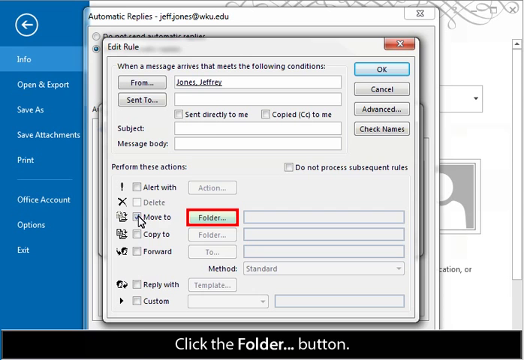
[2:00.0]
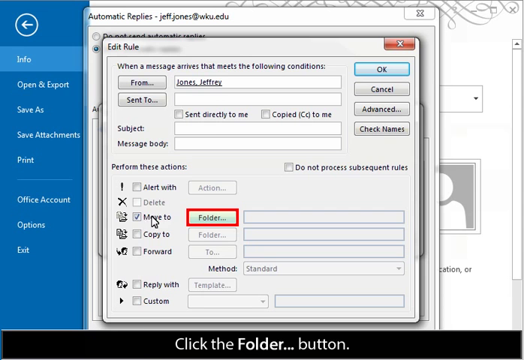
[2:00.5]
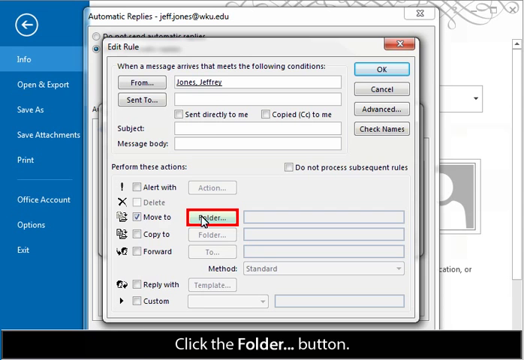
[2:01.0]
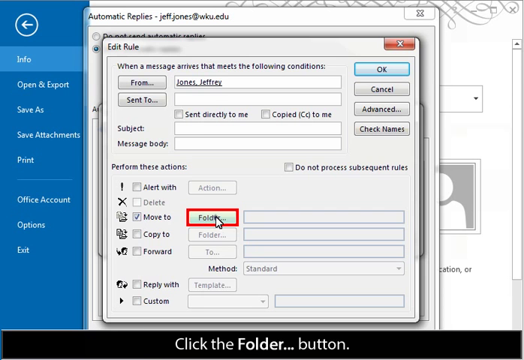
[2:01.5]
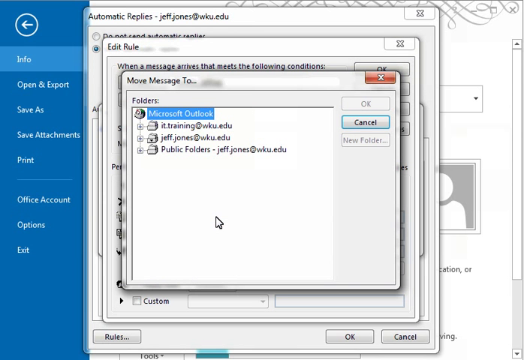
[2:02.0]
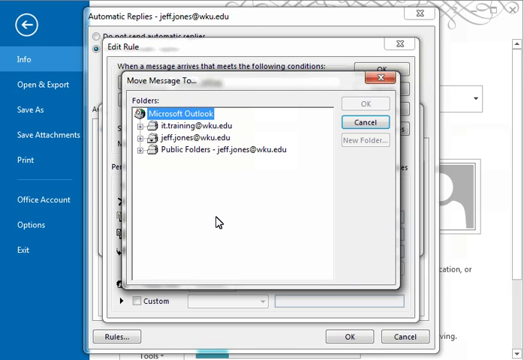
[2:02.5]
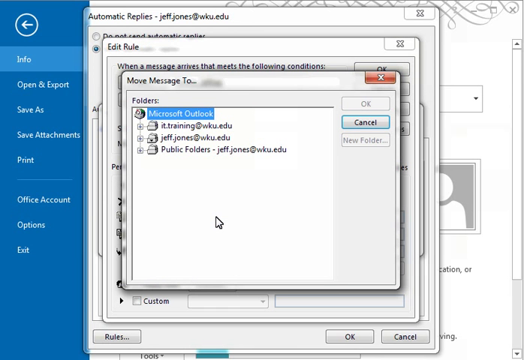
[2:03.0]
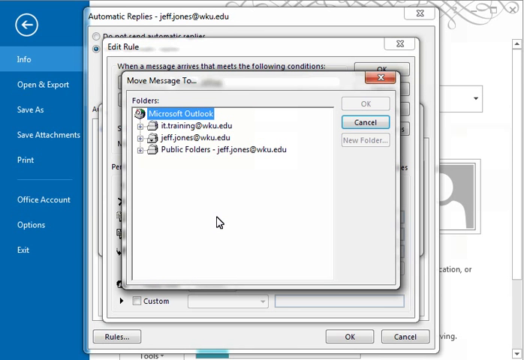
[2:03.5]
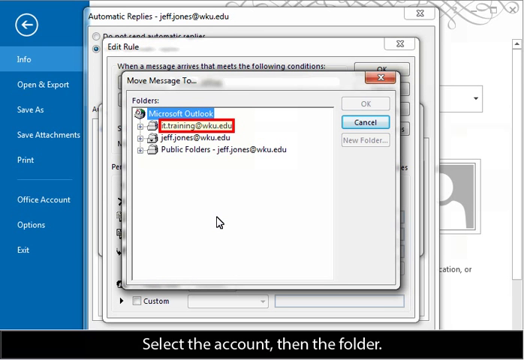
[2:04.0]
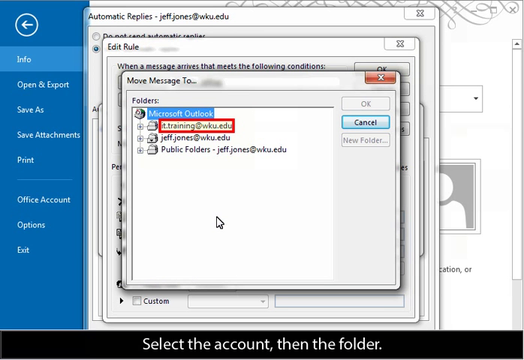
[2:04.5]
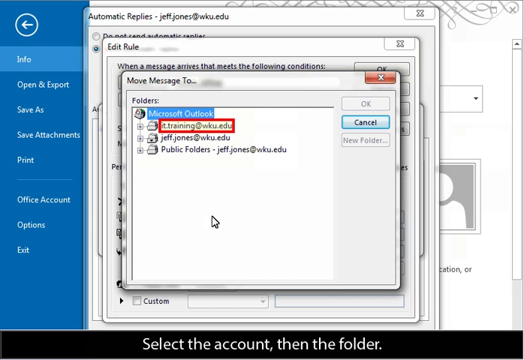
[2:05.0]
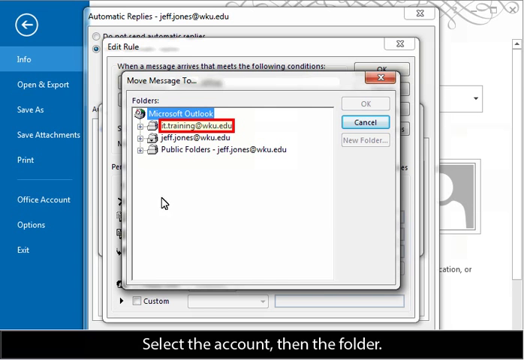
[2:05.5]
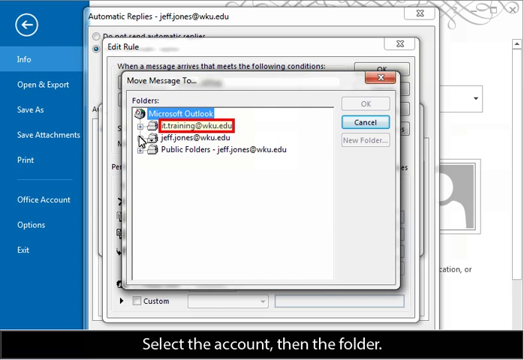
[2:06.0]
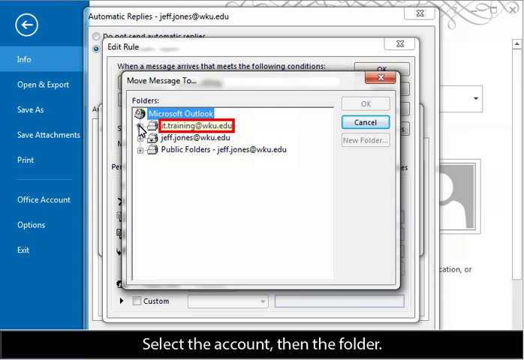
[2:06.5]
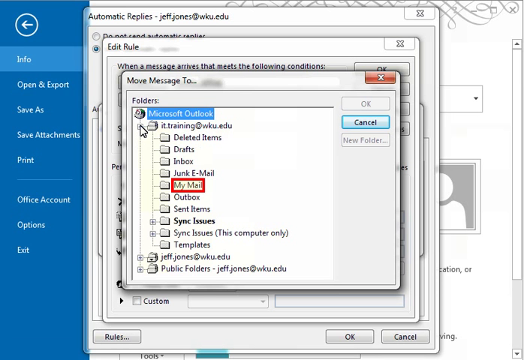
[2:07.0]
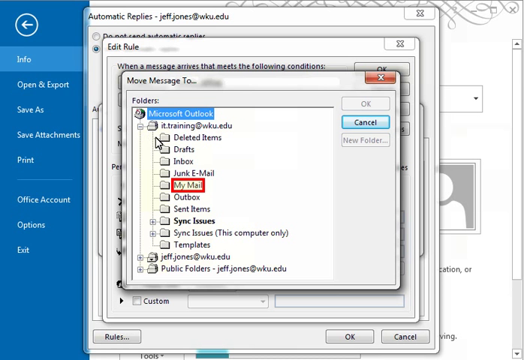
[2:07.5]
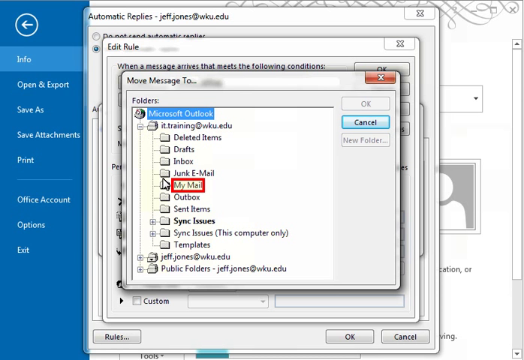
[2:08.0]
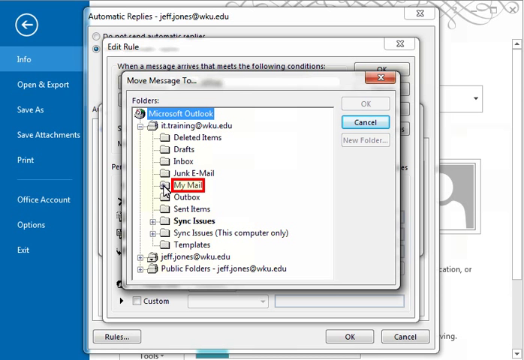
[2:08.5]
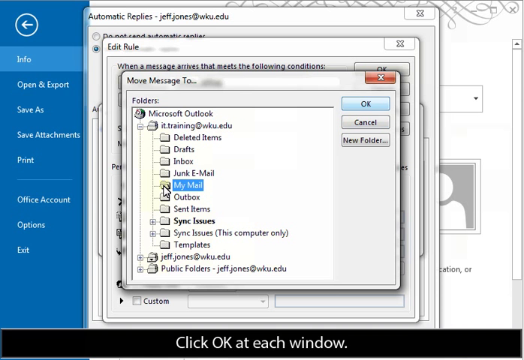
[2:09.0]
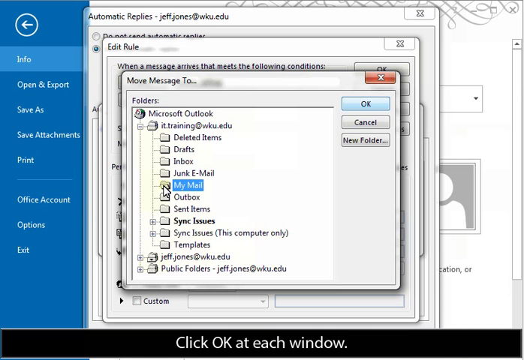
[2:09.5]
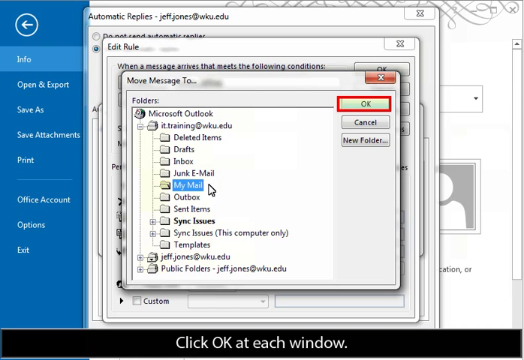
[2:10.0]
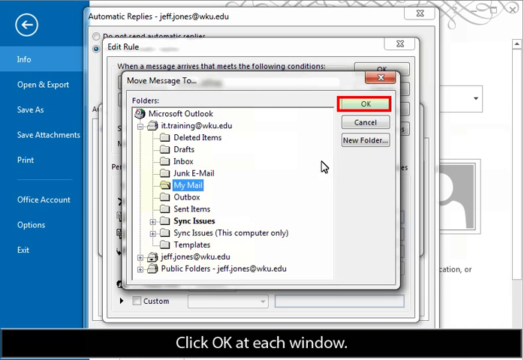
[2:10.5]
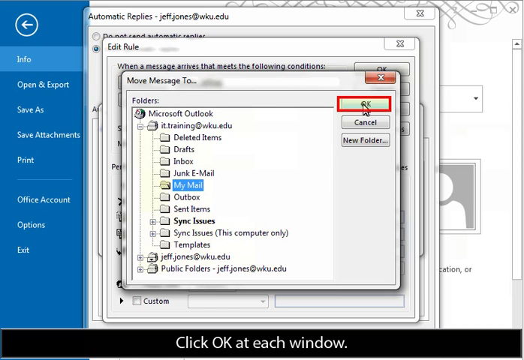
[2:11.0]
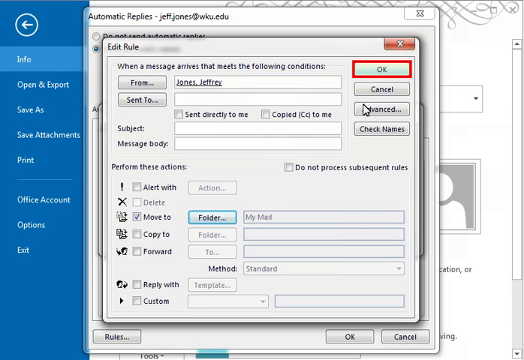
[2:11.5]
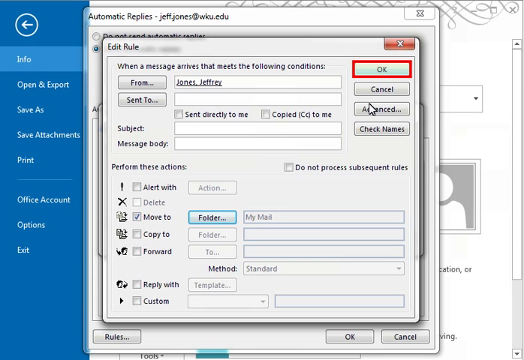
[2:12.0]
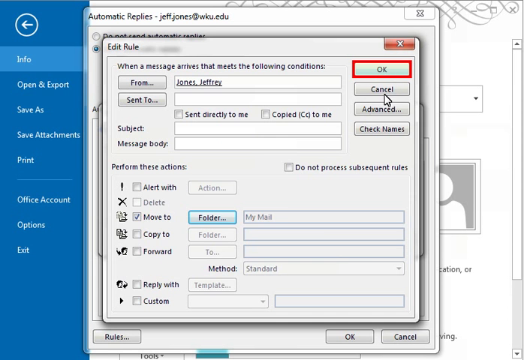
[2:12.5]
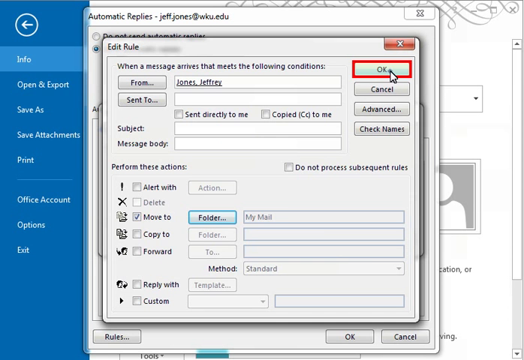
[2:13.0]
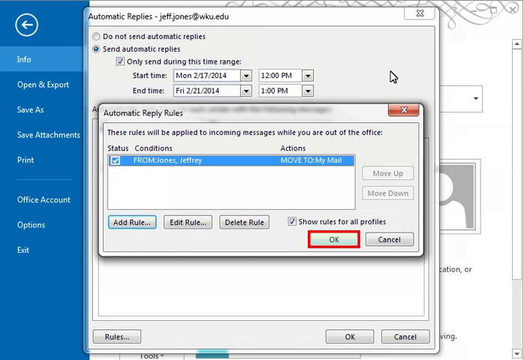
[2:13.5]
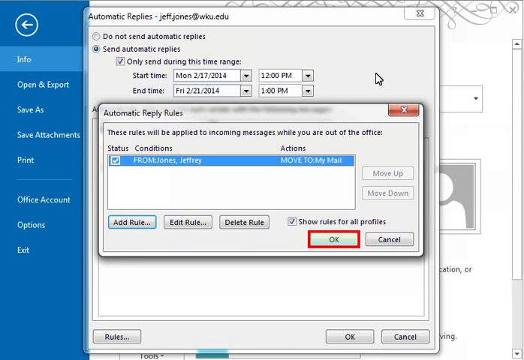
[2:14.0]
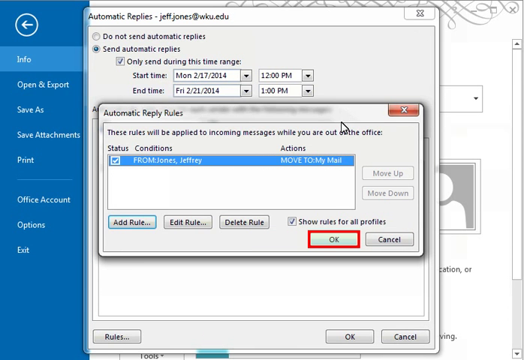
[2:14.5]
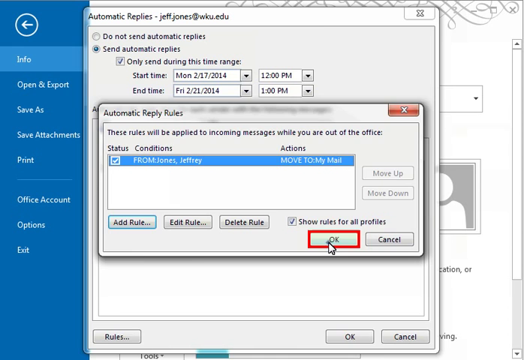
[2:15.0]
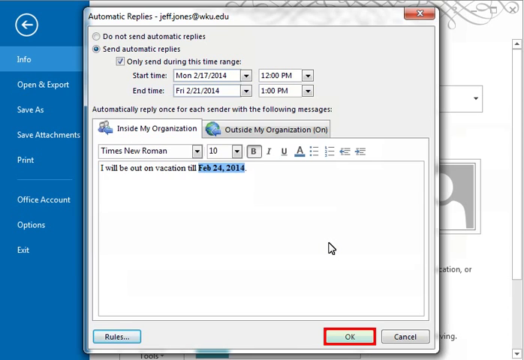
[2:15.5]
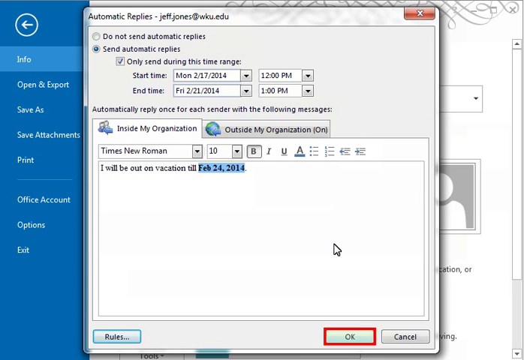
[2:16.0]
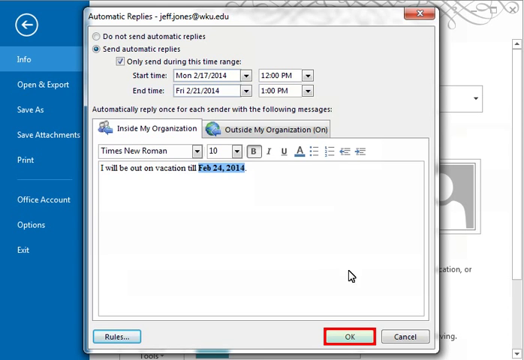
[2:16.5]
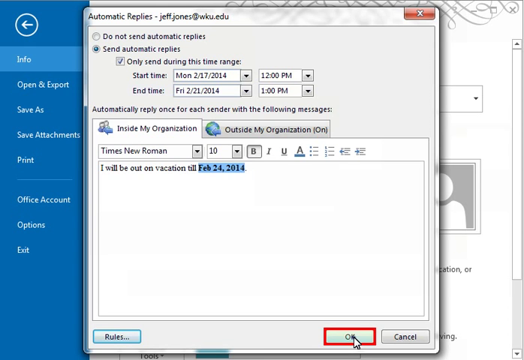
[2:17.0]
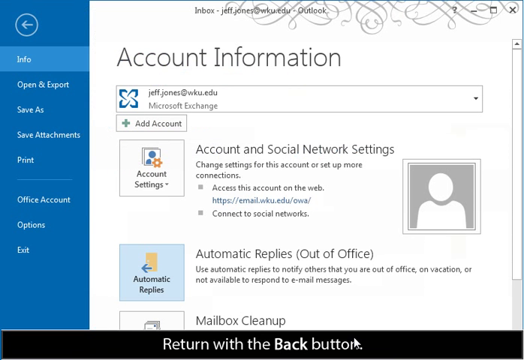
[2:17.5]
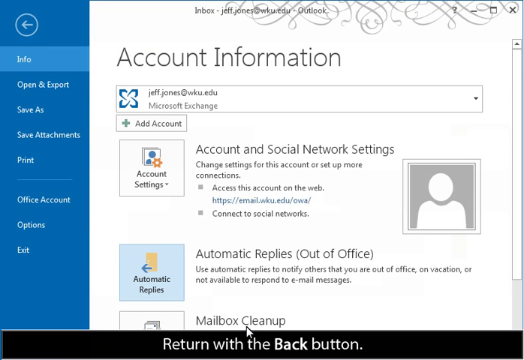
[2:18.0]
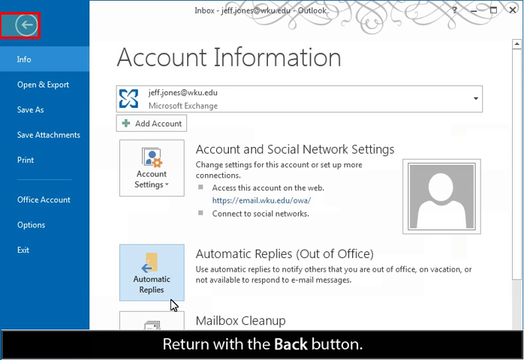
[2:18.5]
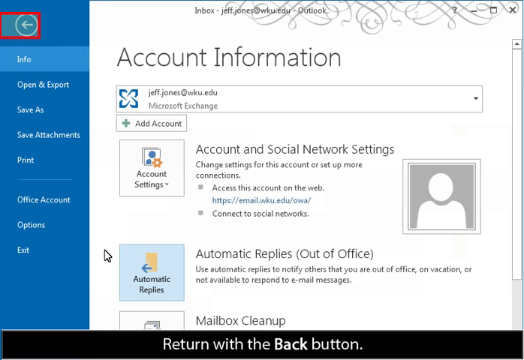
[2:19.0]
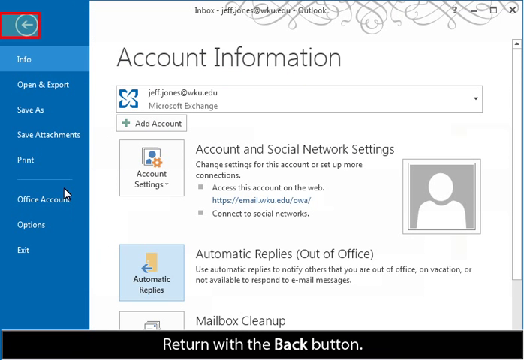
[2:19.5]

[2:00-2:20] The "Edit Rule" page of the out-of-office assistant is shown, with options for how a message to a certain individual is handled. A cursor moves around the page, checks an option, and then OK is selected. A screen titled "Account Information" appears. Under it are "jeffjones@wku.edu, Microsoft Exchange" and "Add Account," followed by "Account and Social Network Settings," "Change settings for this account or set up more connections," "Access this account on the web" and "Connect to social networks." Next it says "Automatic Replies (Out of Office) Use automatic replies to notify others that you are out of office, on vacation, or not available to respond to e-mail messages."